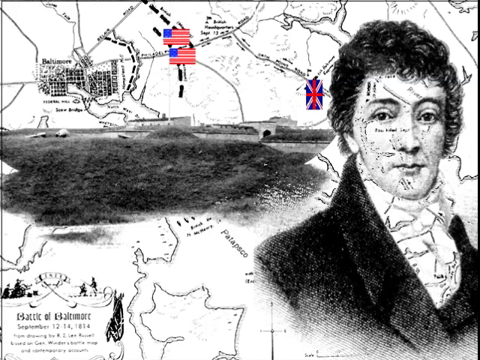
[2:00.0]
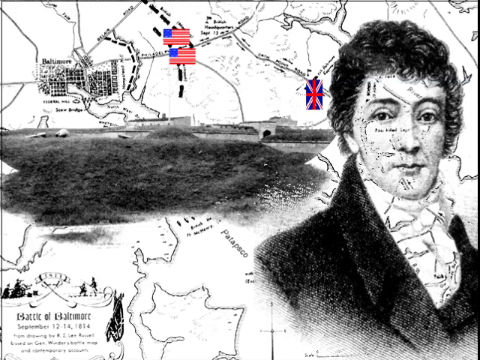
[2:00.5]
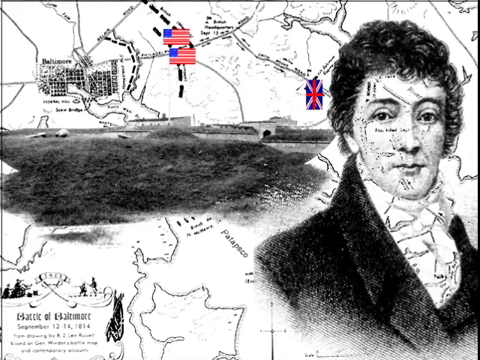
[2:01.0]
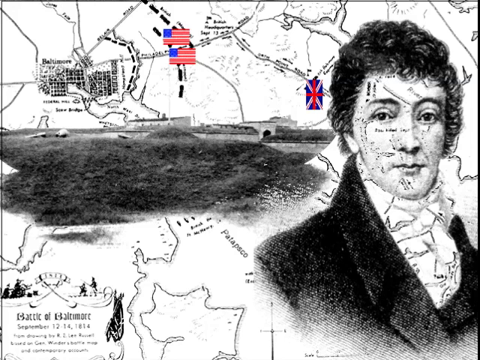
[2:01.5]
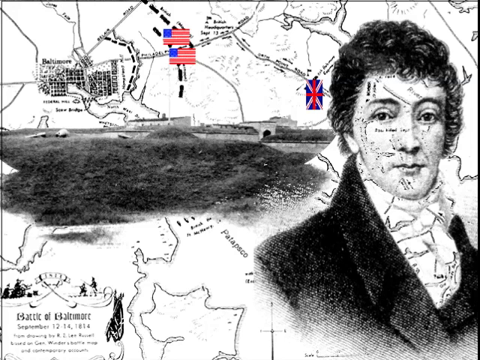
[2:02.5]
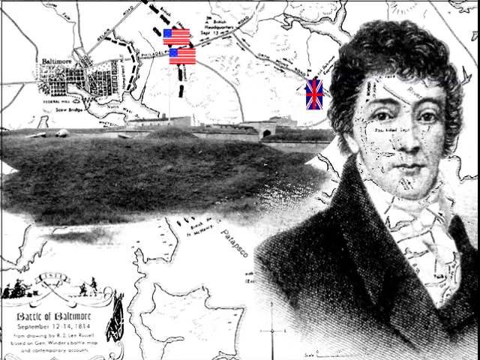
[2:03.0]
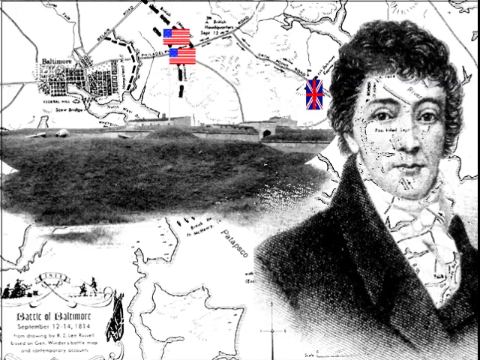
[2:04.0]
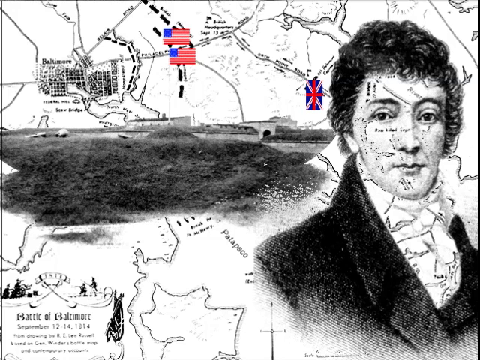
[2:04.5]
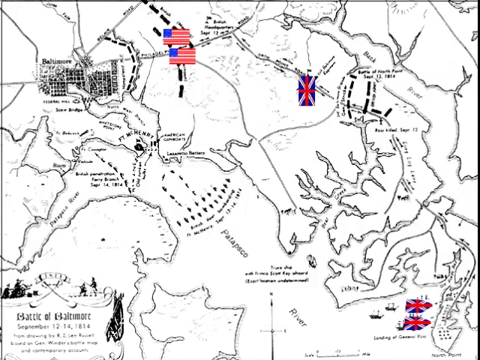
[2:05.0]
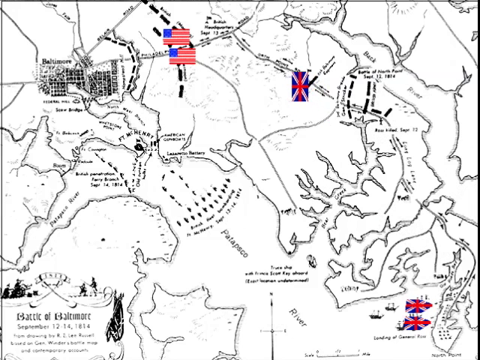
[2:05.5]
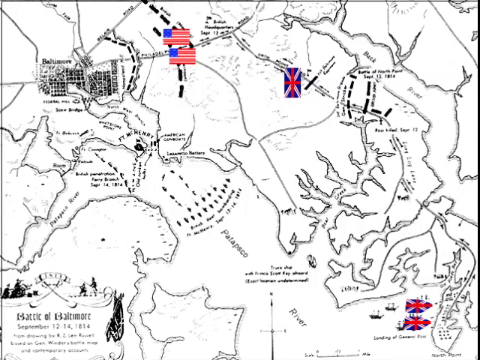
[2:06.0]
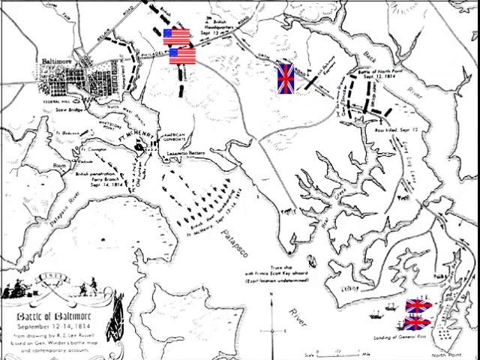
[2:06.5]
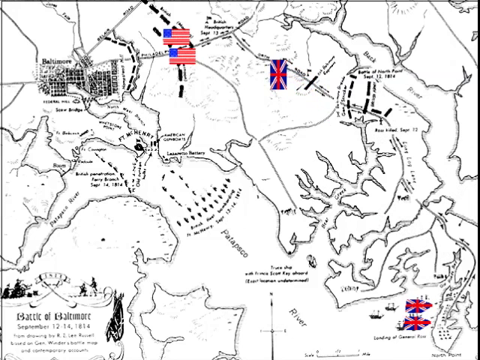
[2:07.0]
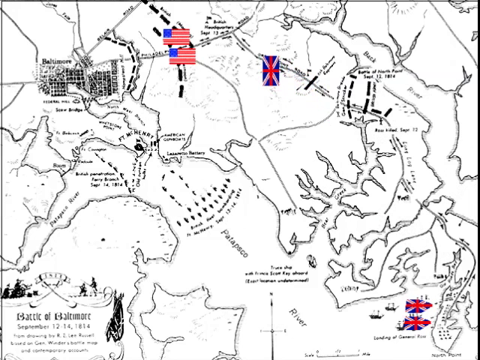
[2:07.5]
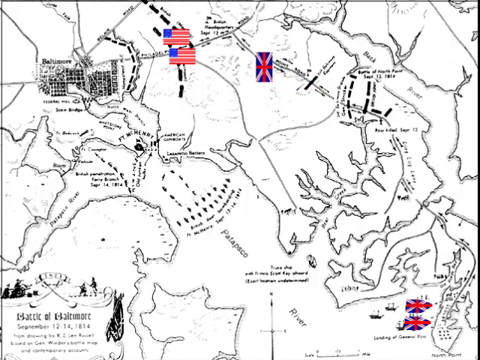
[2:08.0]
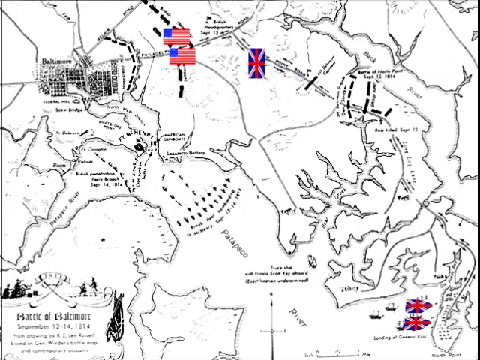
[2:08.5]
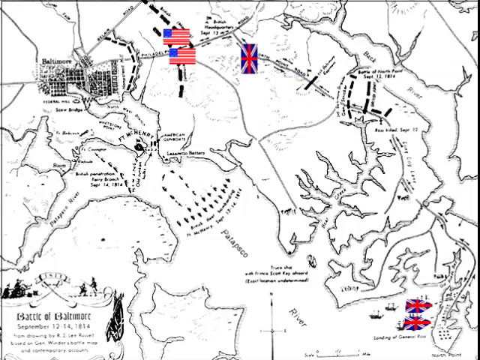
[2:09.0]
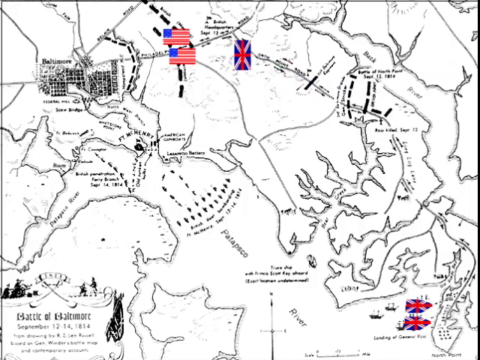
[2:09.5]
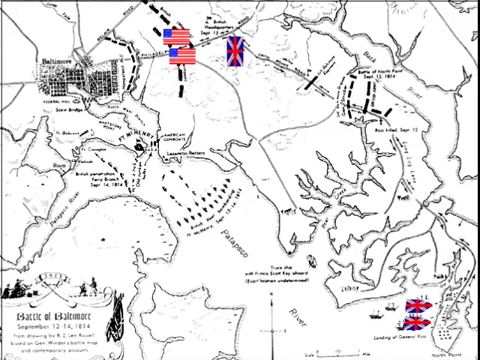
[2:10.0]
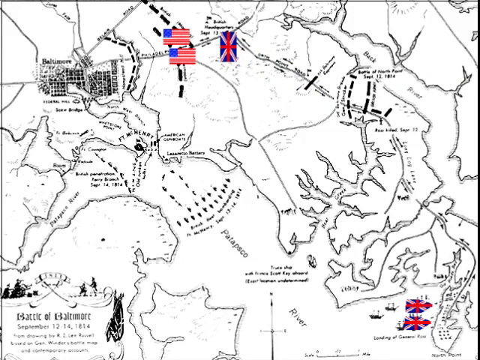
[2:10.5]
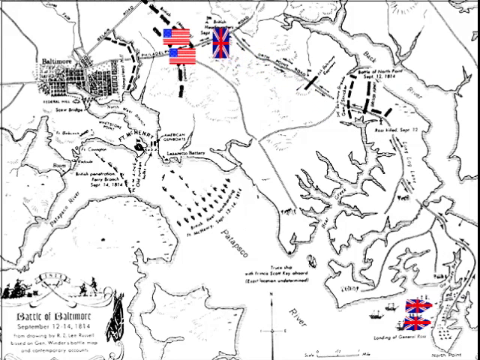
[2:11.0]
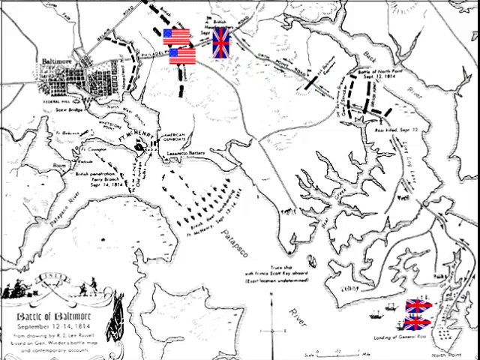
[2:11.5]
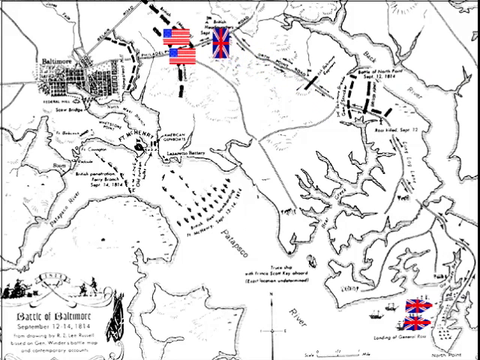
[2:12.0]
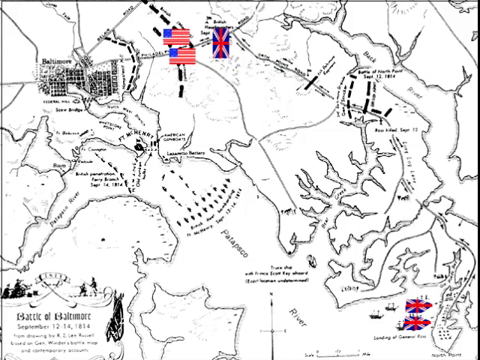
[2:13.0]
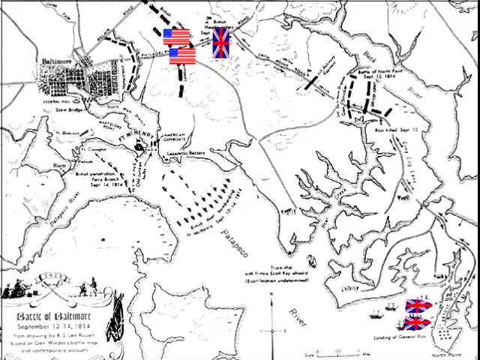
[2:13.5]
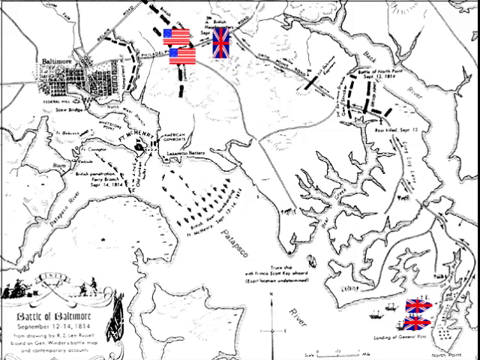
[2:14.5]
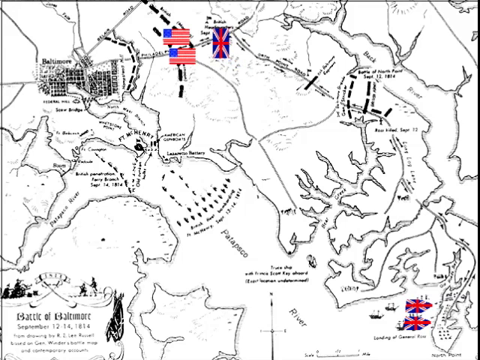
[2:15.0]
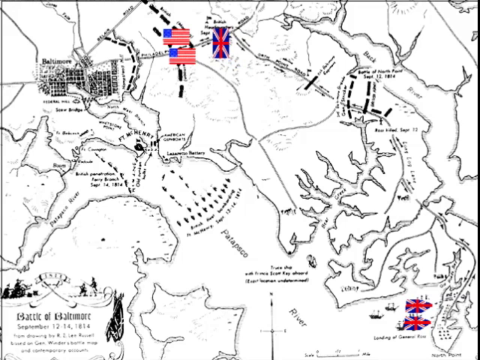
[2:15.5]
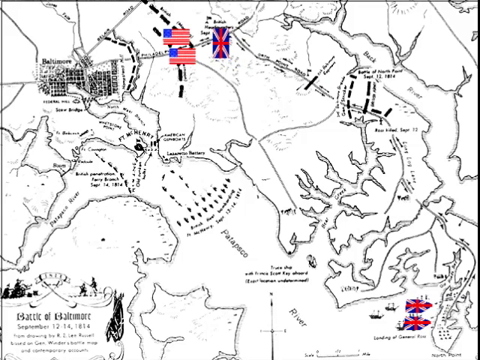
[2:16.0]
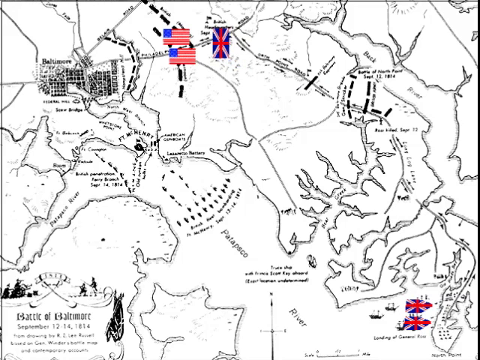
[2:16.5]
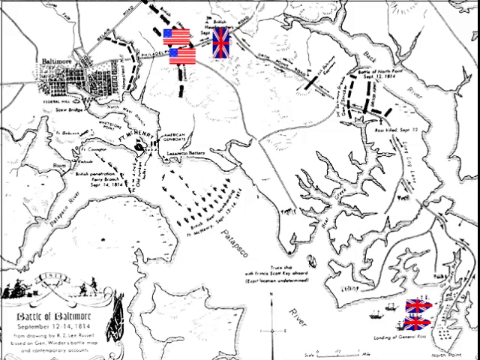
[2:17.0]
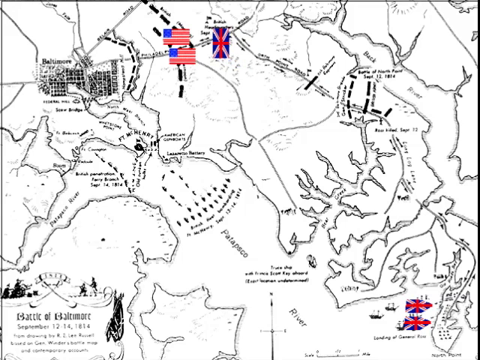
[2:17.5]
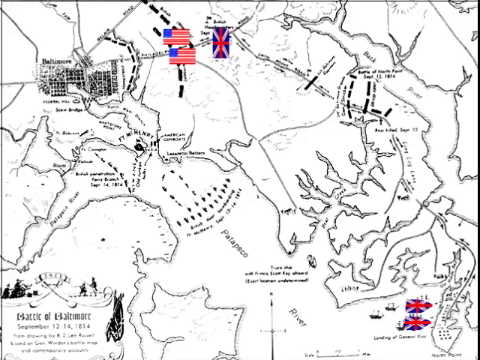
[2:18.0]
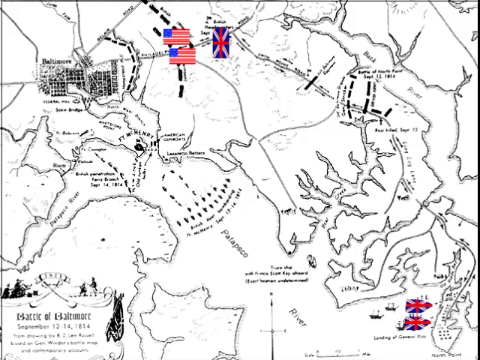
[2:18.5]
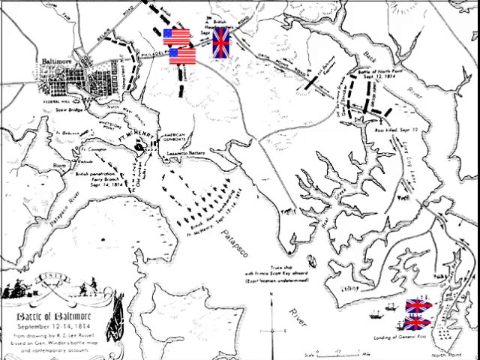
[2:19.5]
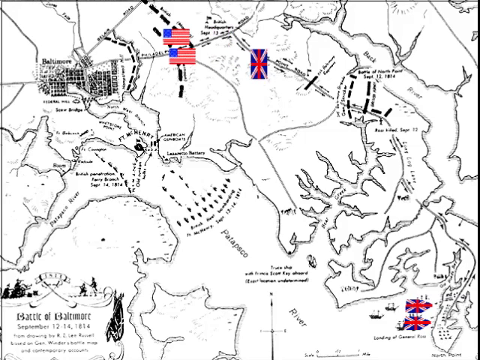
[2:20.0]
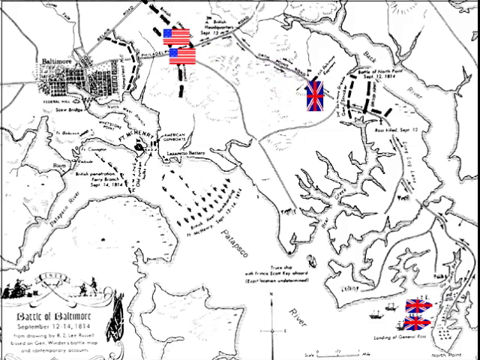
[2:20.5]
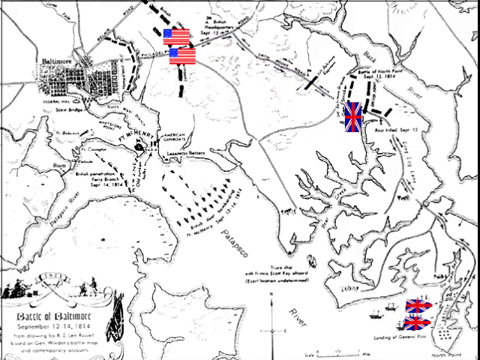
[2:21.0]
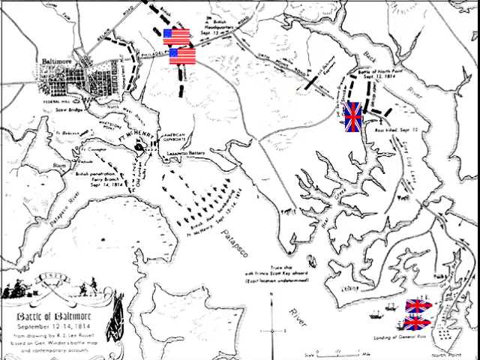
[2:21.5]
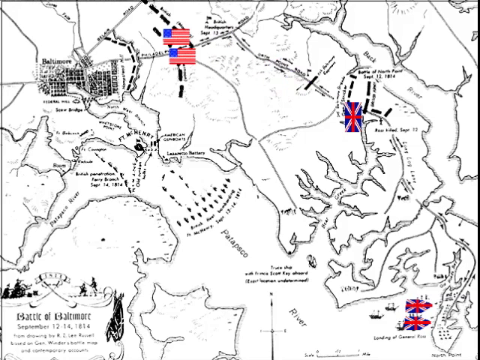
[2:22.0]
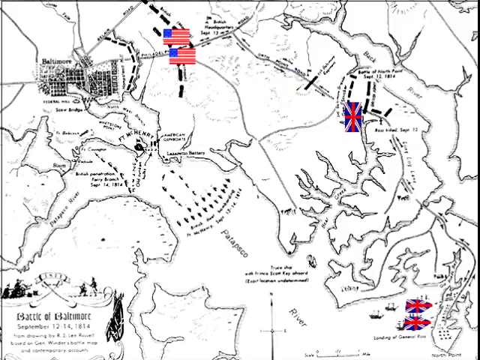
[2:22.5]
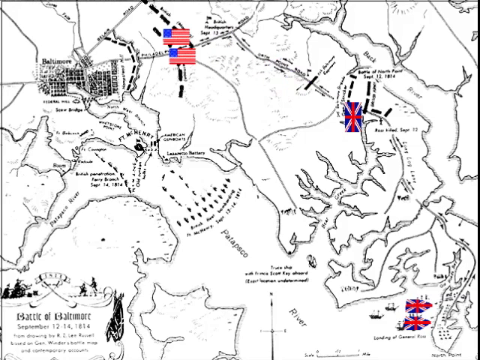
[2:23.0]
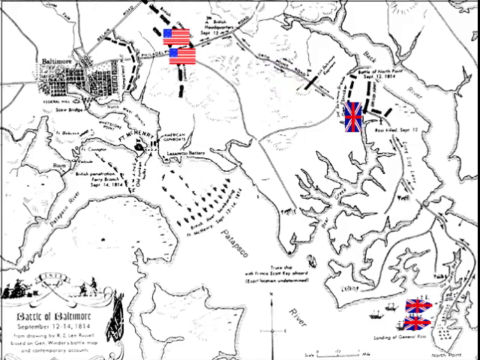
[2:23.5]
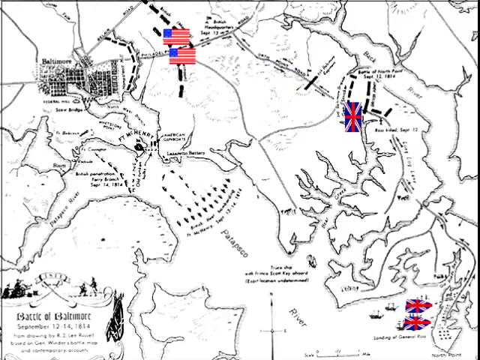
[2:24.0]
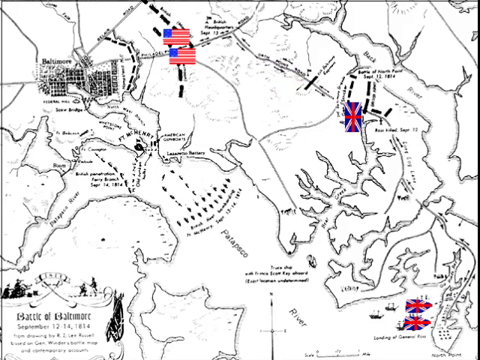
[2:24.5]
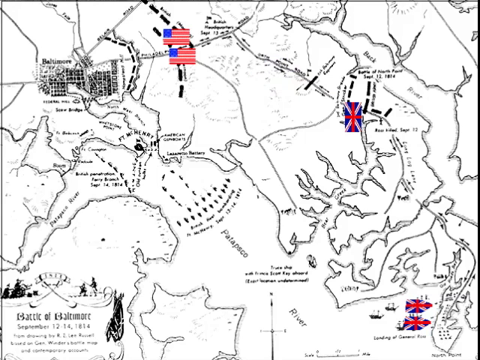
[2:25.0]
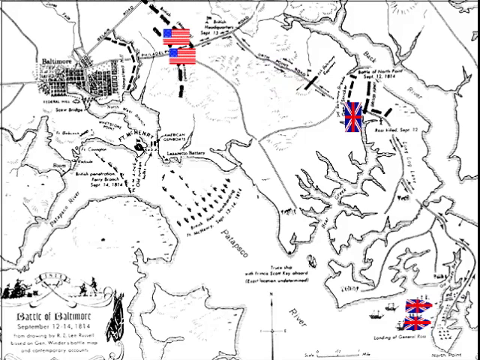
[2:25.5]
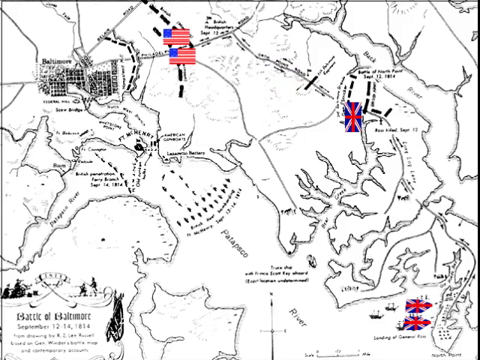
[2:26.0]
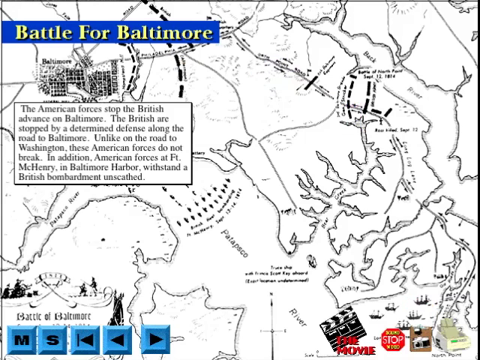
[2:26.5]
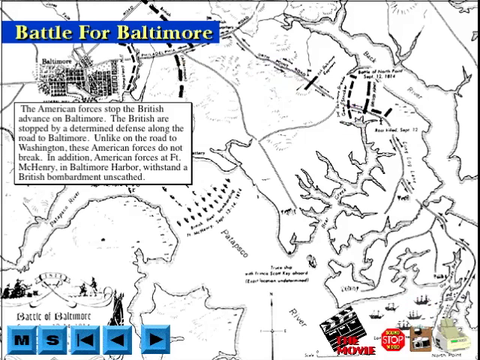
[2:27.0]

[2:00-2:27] A map drawn in pencil shows where the Battle of Baltimore took place, in and around the Patapasco River and possibly the Hack River. Great Britain's forces, its ships, are in a harbor, represented by flags. They make their way onto shore and move toward the American forces, represented by U.S. flags, pushing until the American flags retreat quite a distance away. The flag of Great Britain continues toward the American forces and then retreats on its own about halfway back. Text then appears over the map, apparently reading "the battle for Baltimore".